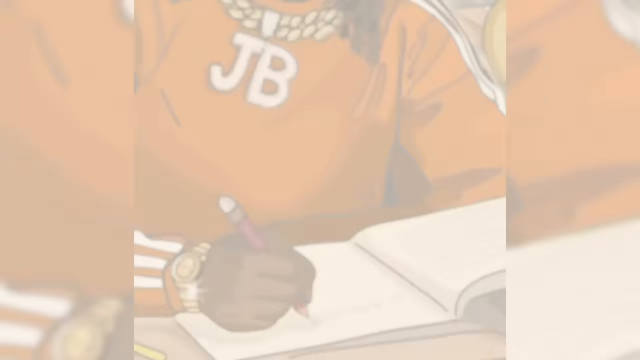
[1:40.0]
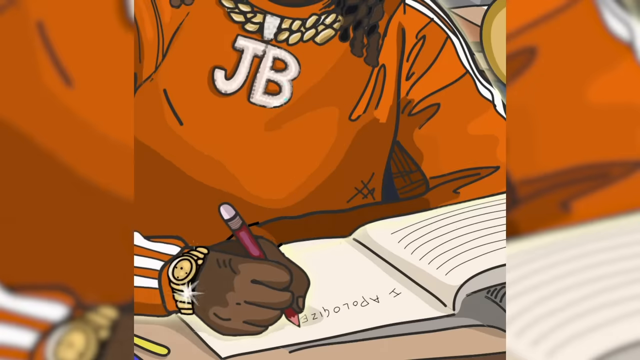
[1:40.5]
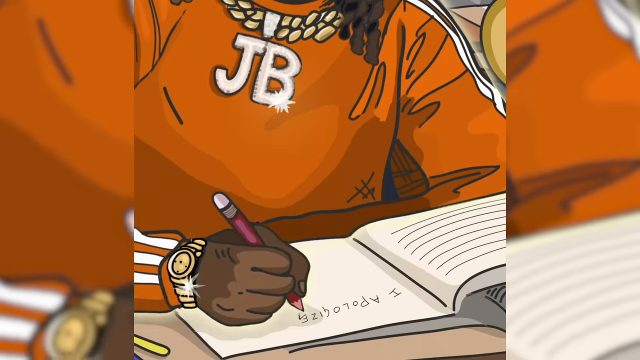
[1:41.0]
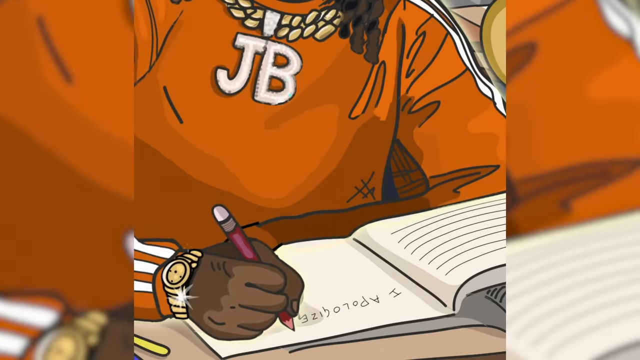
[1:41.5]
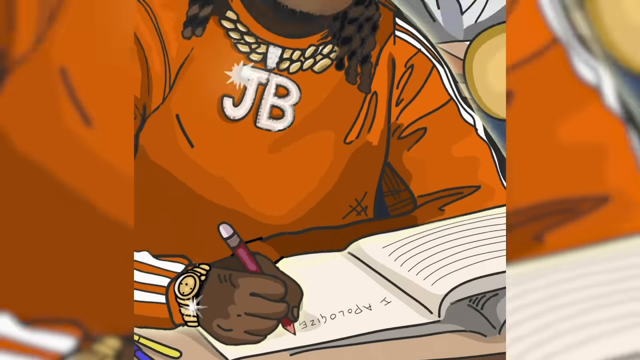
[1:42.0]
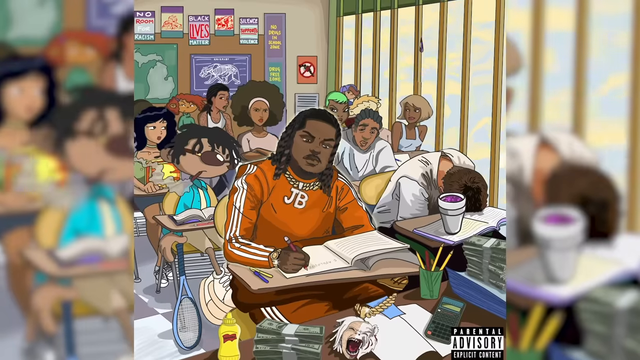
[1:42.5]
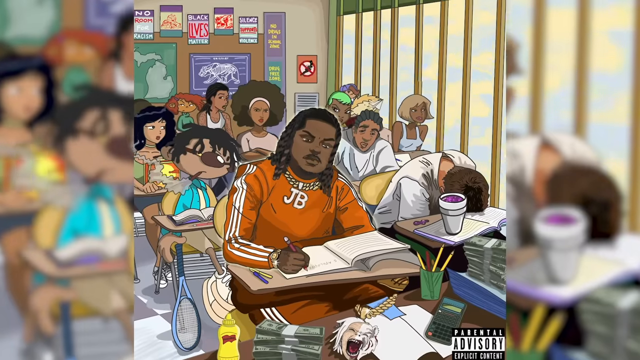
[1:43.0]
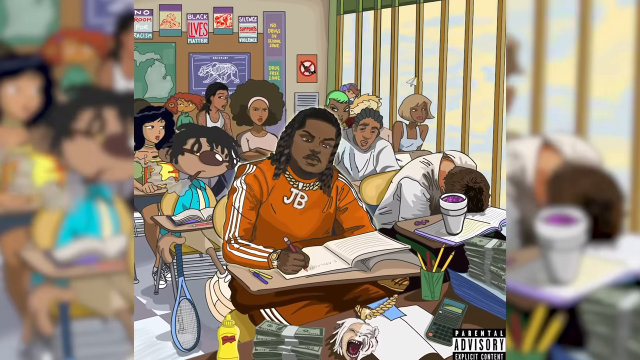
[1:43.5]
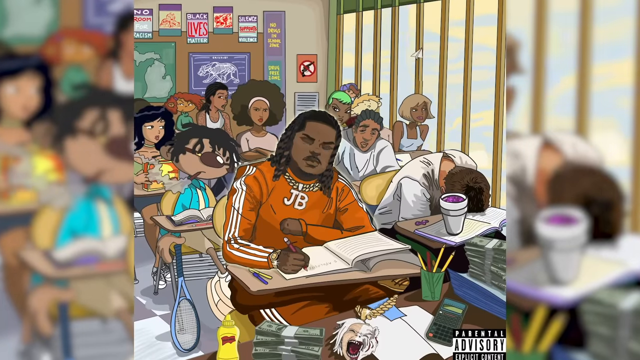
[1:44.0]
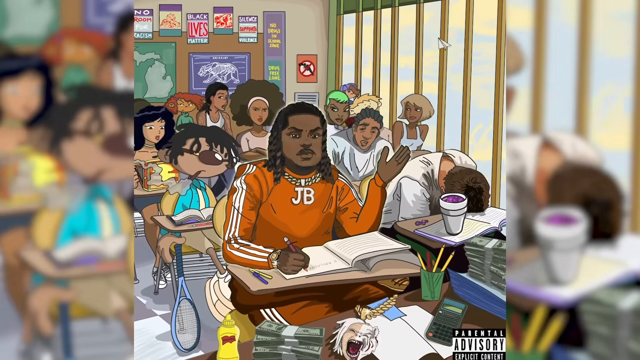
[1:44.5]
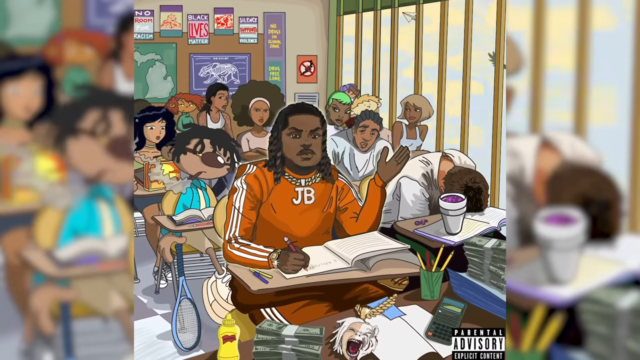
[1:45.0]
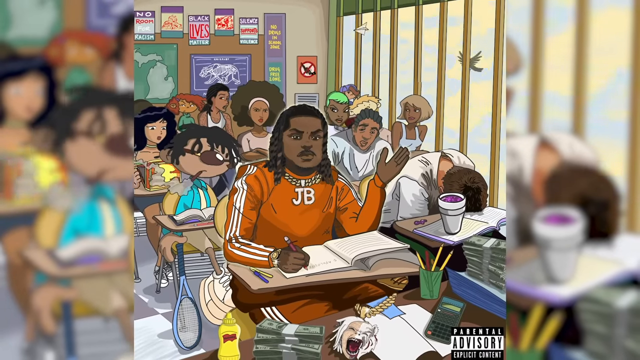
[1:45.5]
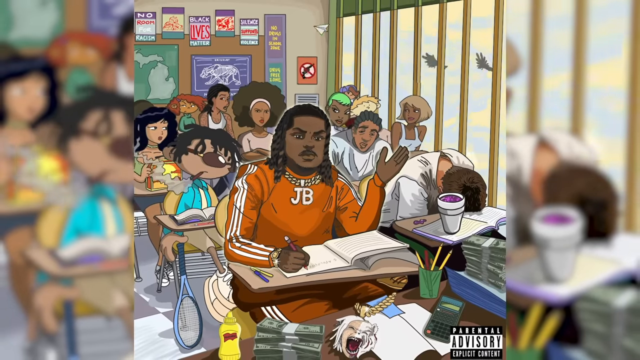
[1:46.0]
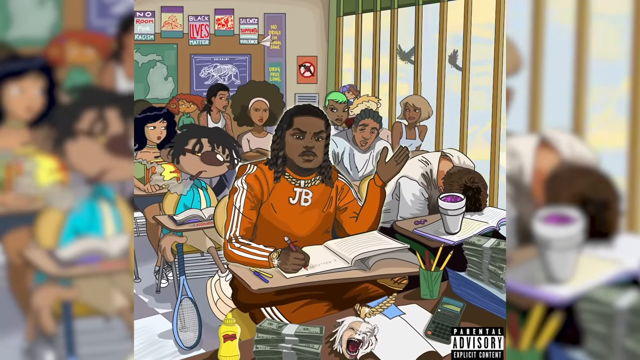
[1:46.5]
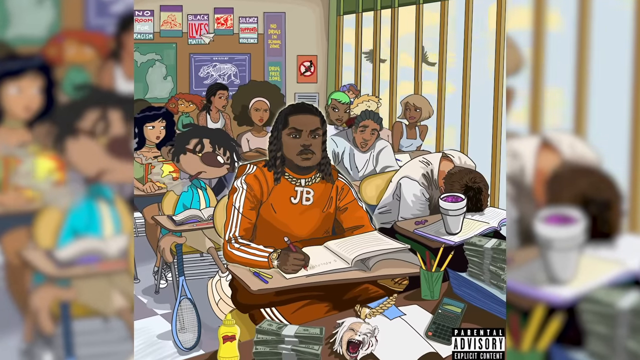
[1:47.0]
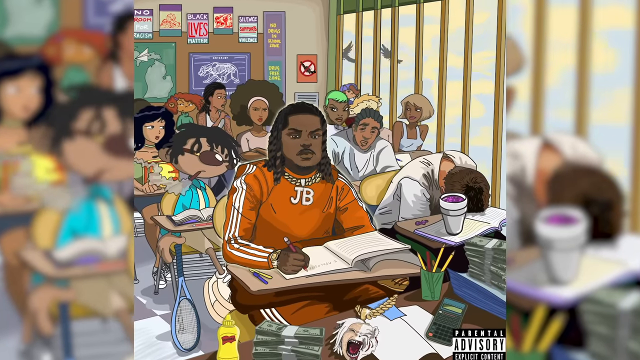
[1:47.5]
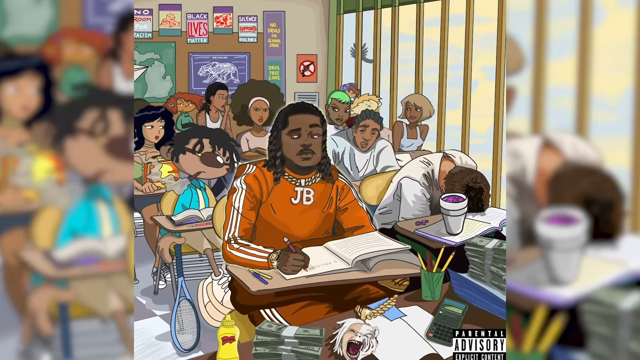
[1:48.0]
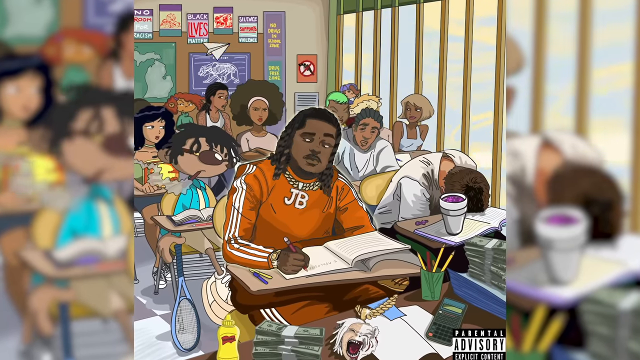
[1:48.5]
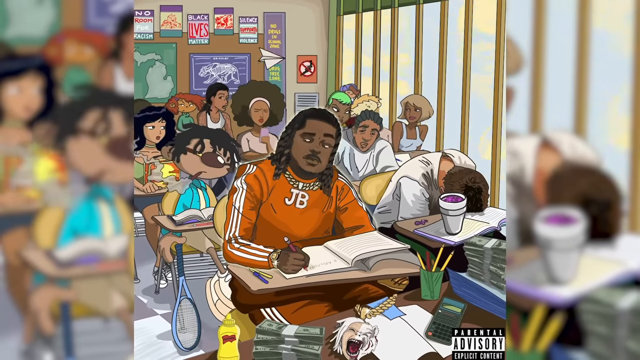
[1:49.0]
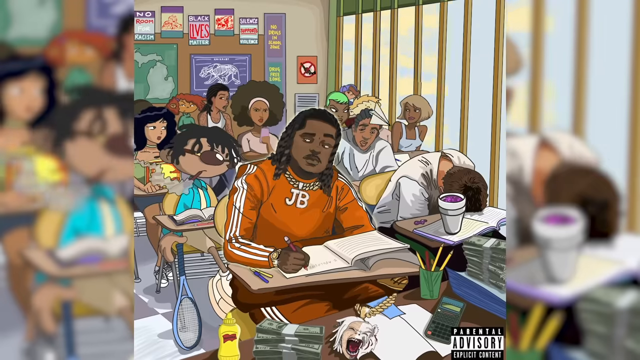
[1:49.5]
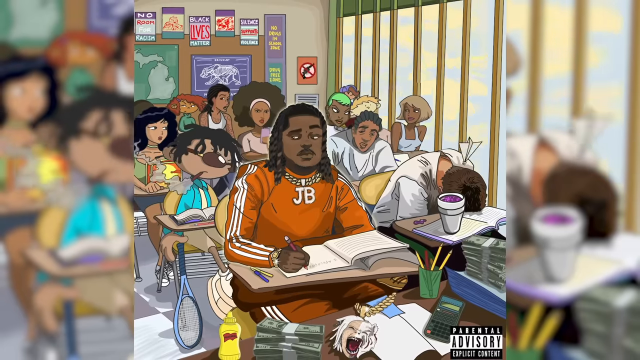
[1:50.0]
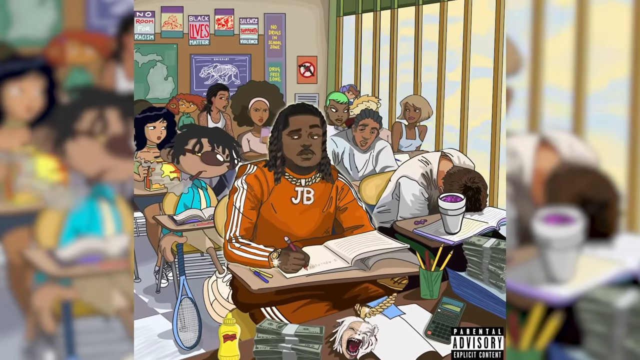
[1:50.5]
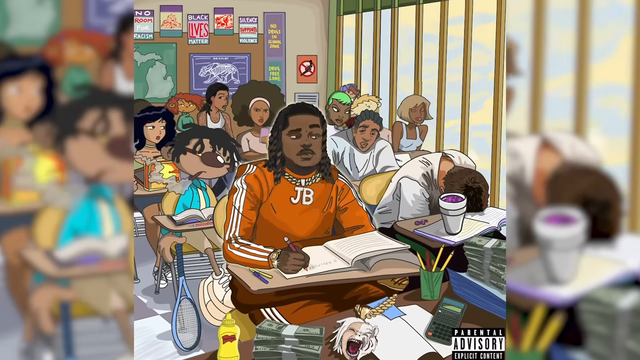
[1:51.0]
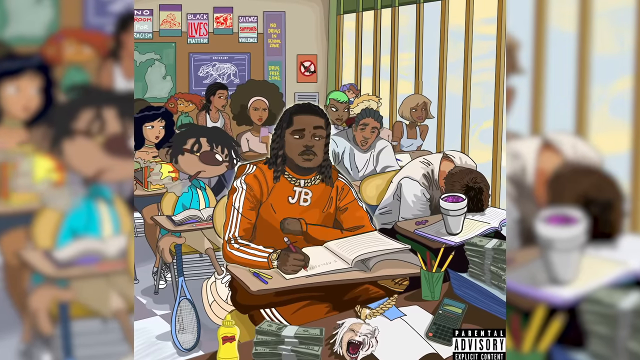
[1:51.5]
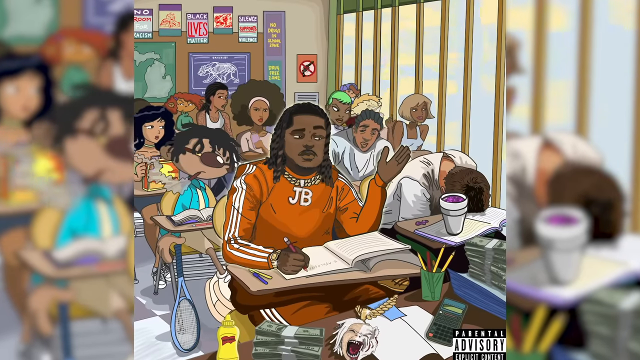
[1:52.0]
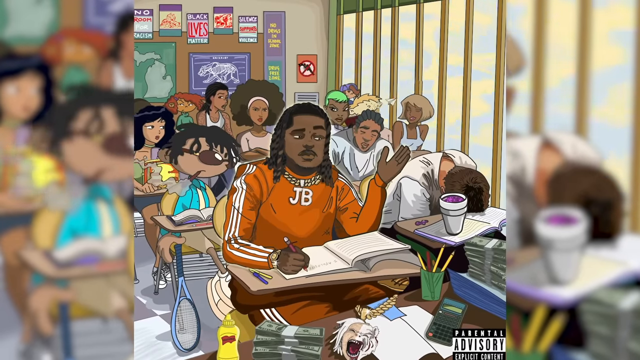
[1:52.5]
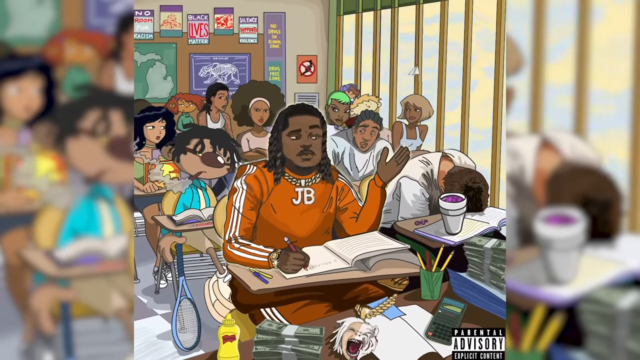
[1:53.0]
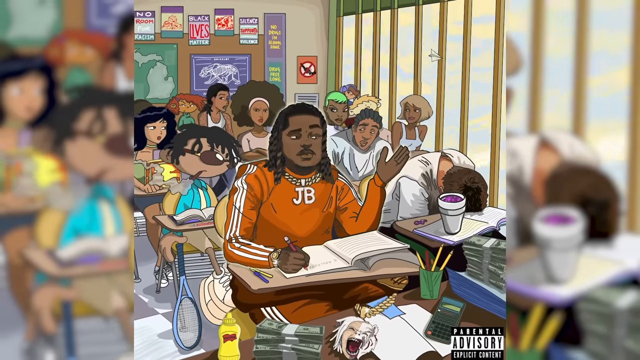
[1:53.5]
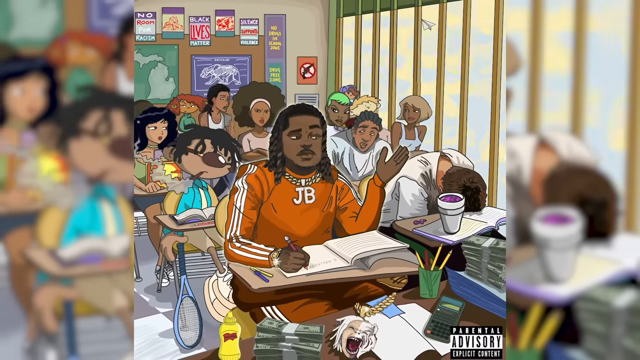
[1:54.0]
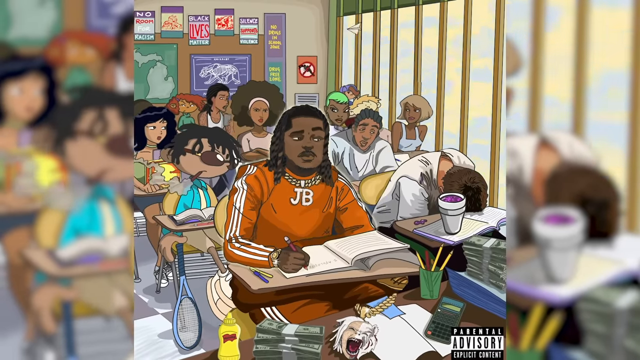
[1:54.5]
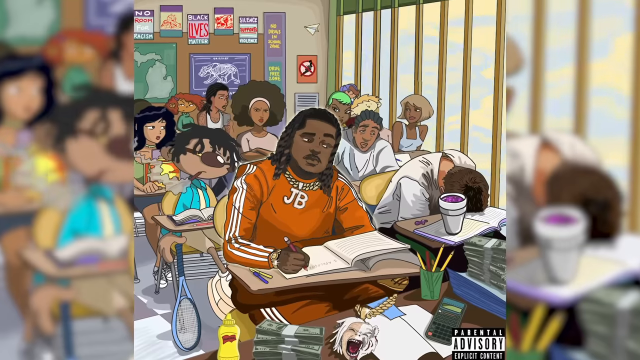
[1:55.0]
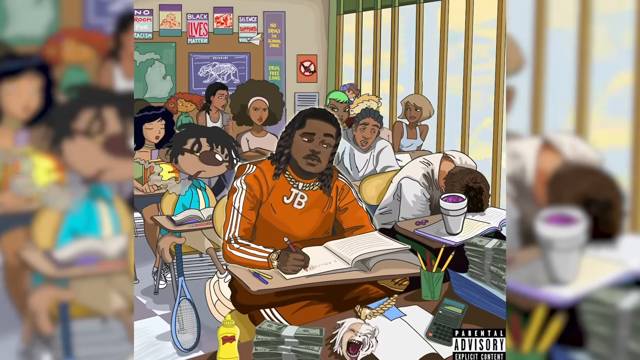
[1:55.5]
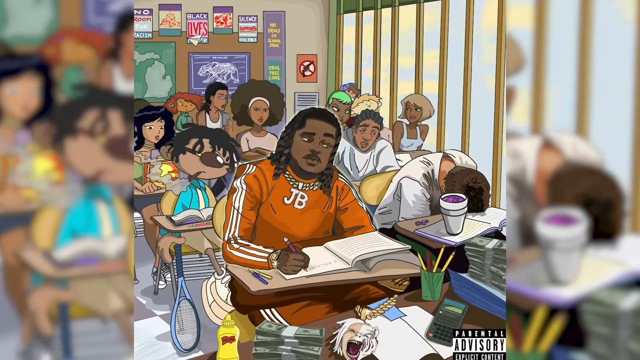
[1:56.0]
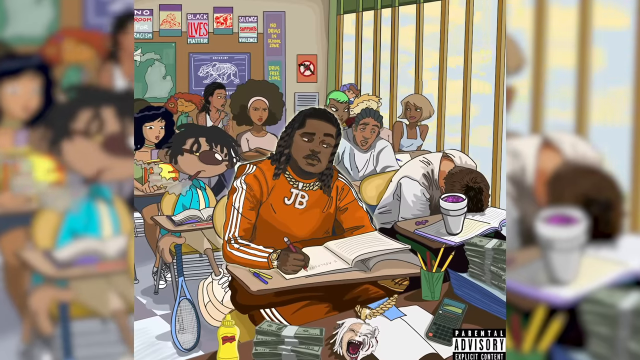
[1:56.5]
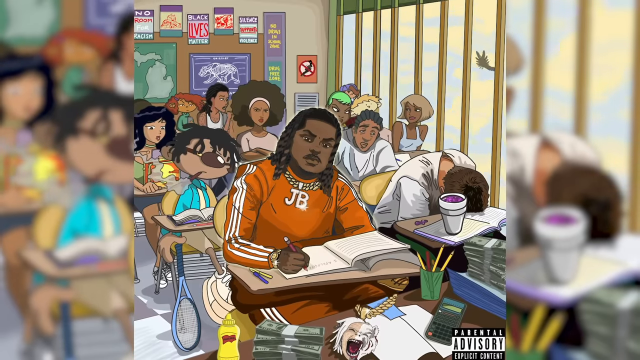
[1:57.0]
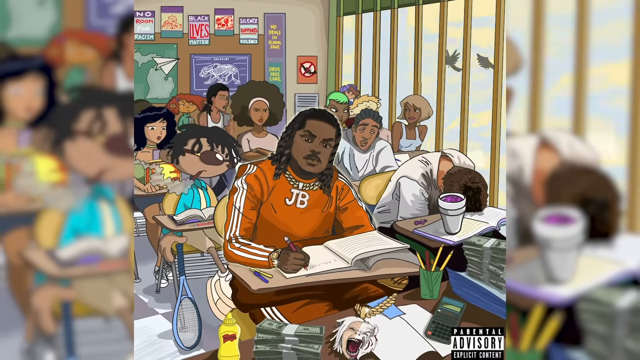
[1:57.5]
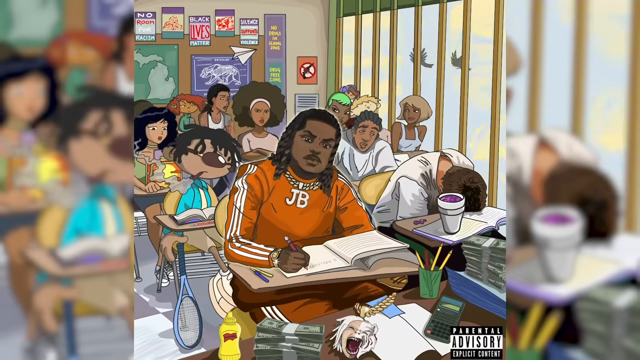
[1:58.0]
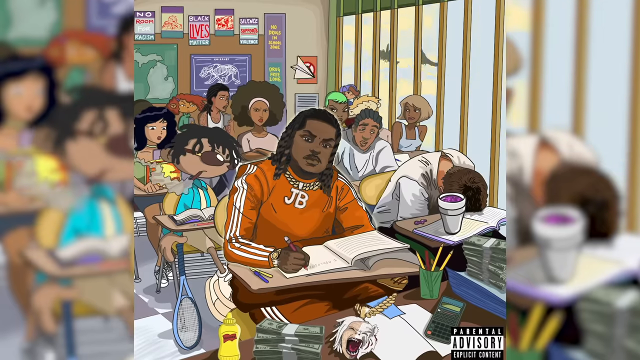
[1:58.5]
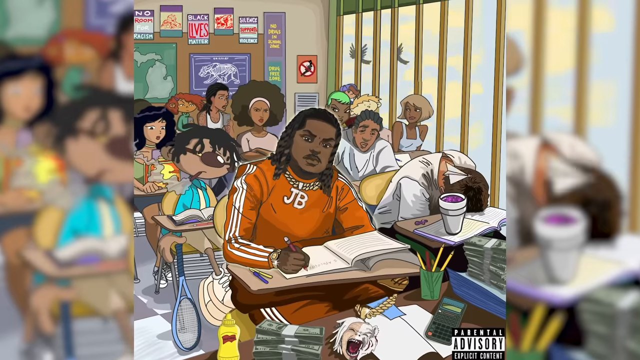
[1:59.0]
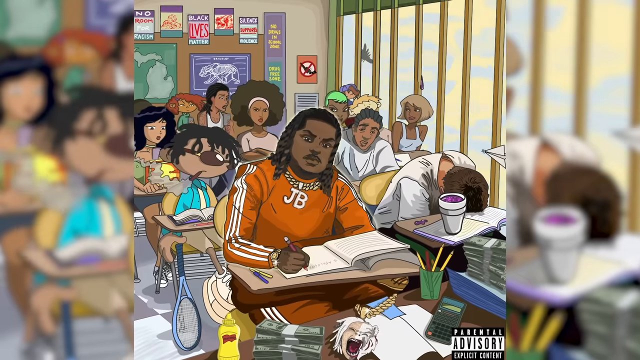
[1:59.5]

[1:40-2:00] JB is still writing "I apologize" in his journal. He throws his hand in the air and brings it back down, looks around the room nodding his head, looks to the other side of the room, raises his hand again and lowers it to his lap. Then he frowns and looks straight ahead. The camera again zooms in on him writing in his journal. He remains surrounded by classmates who seem absent. The young lady with the large afro wears a cream-colored shirt and a cream-colored headband, and appears to be holding a cell phone with a pink case.